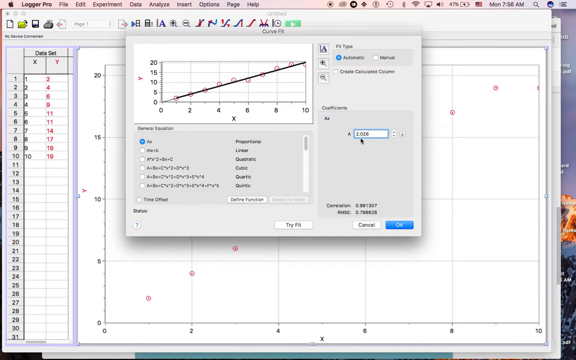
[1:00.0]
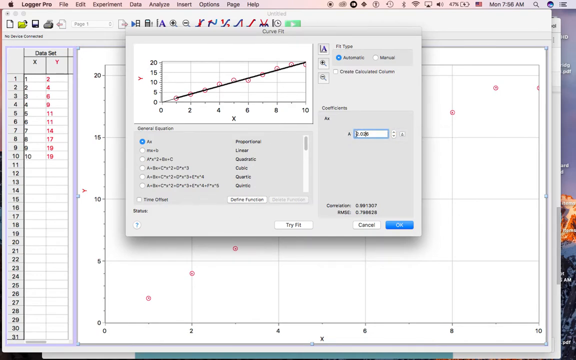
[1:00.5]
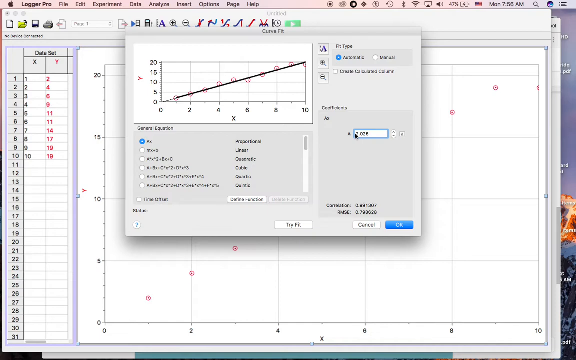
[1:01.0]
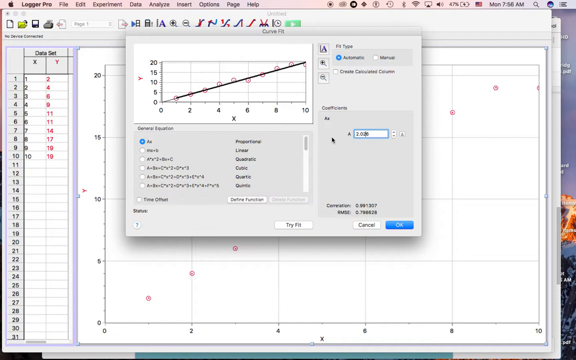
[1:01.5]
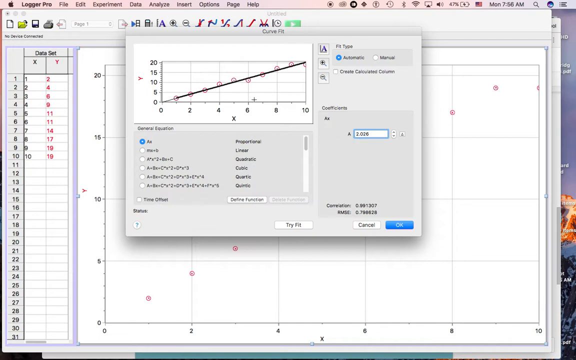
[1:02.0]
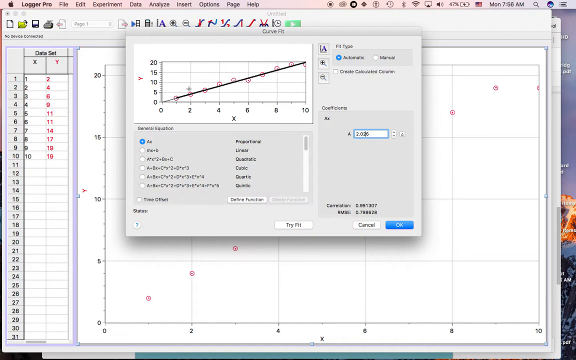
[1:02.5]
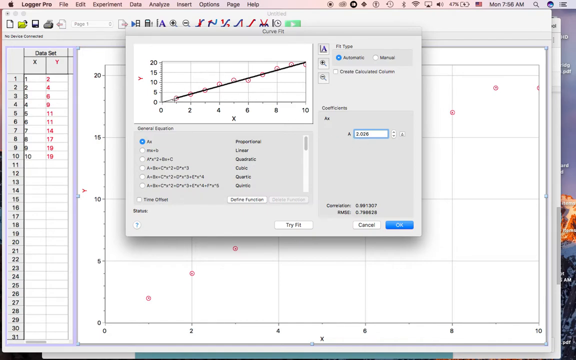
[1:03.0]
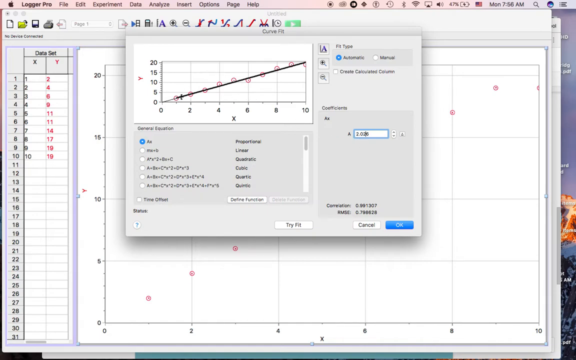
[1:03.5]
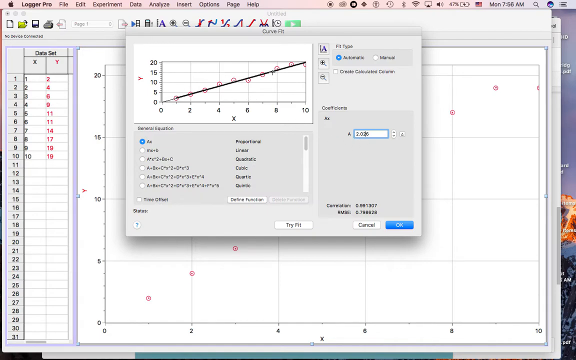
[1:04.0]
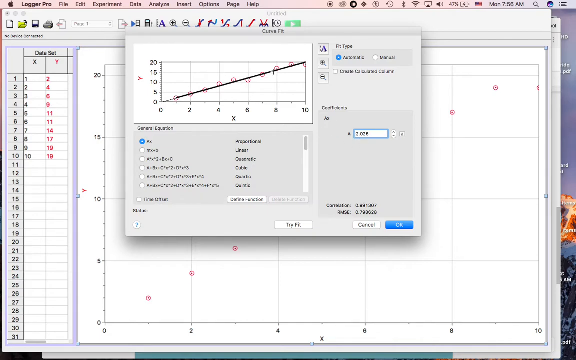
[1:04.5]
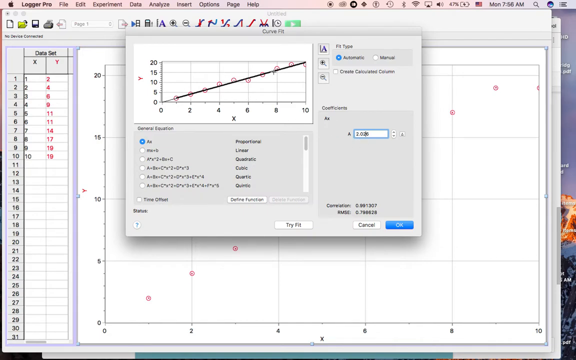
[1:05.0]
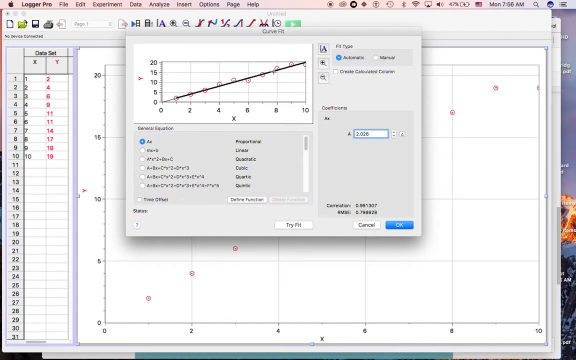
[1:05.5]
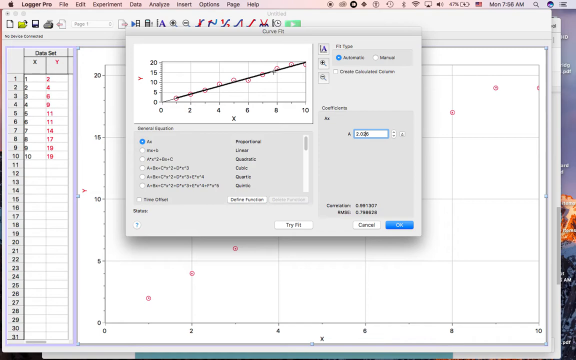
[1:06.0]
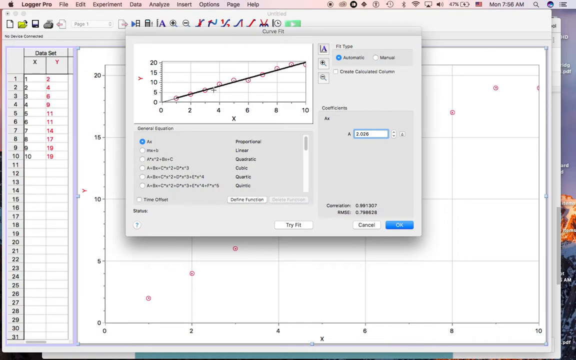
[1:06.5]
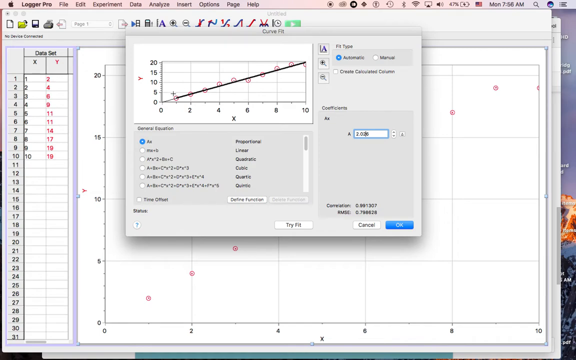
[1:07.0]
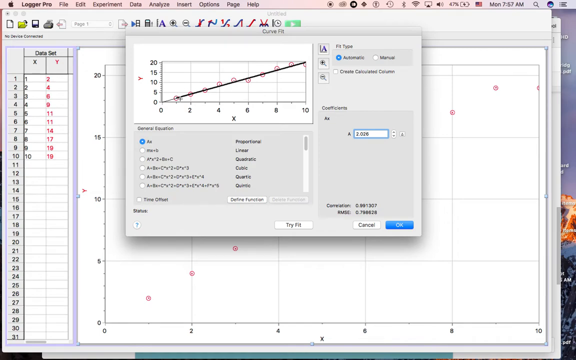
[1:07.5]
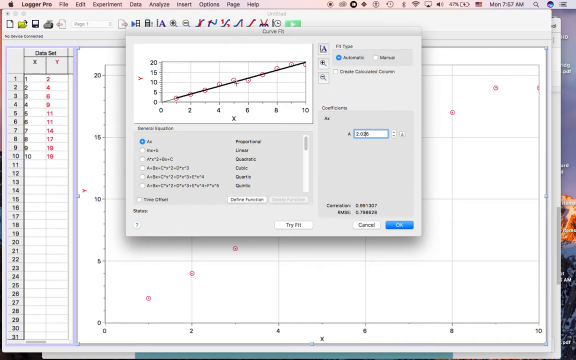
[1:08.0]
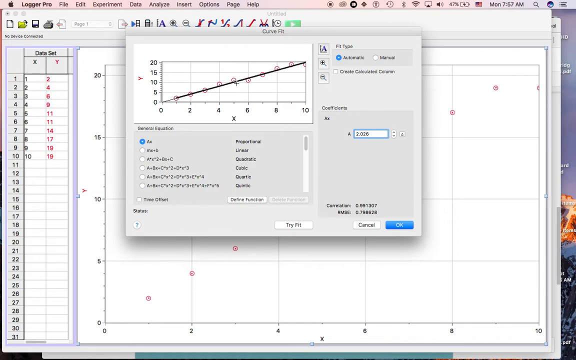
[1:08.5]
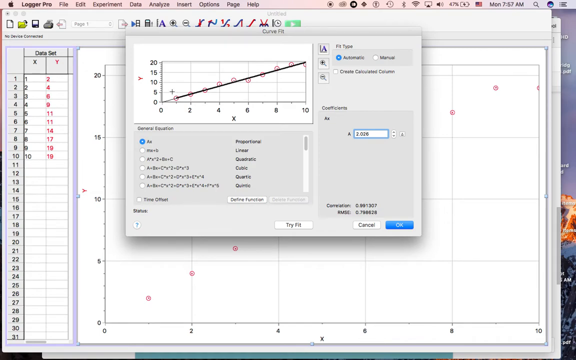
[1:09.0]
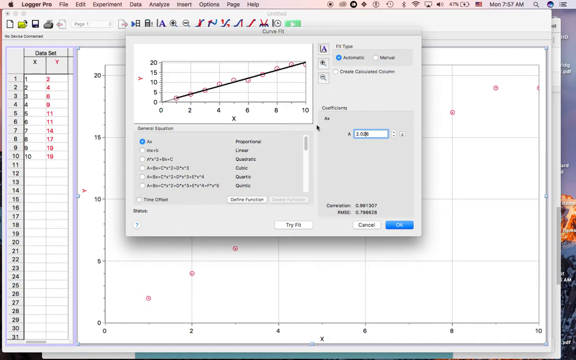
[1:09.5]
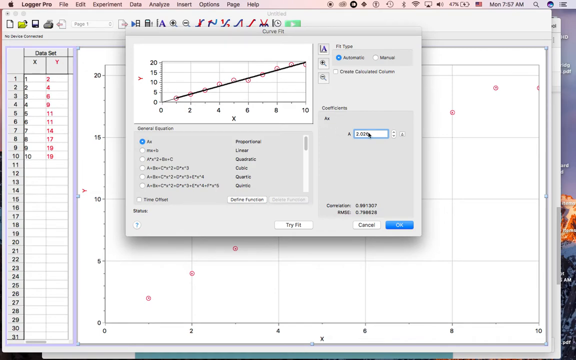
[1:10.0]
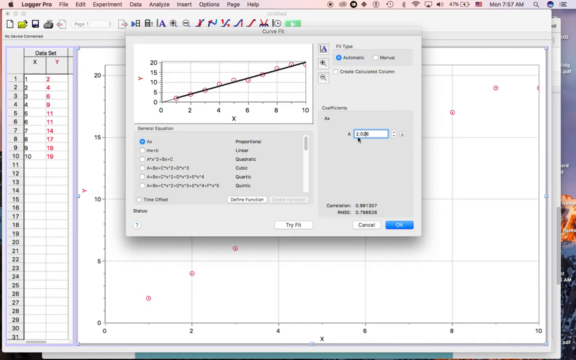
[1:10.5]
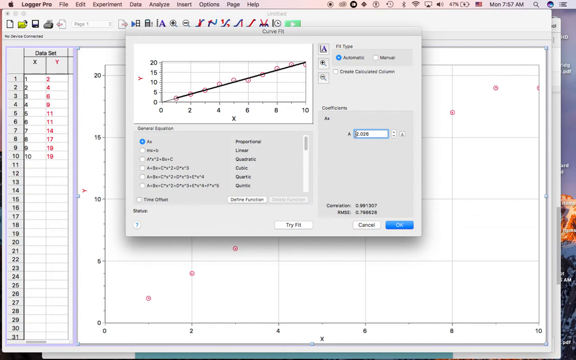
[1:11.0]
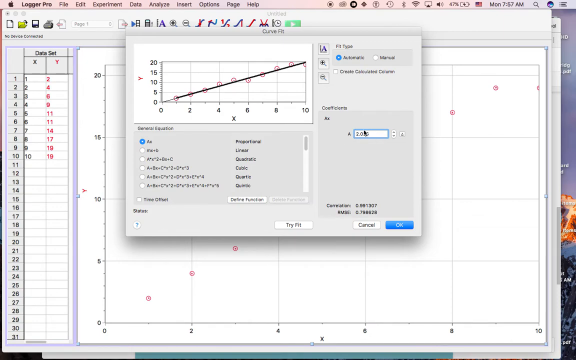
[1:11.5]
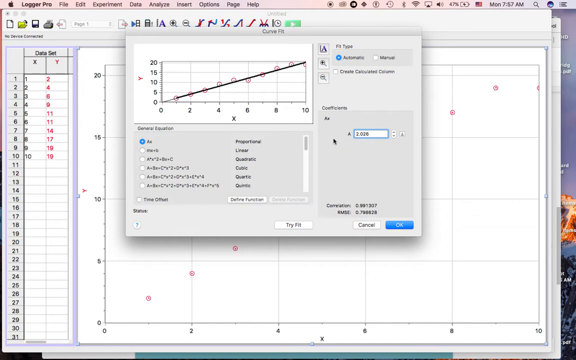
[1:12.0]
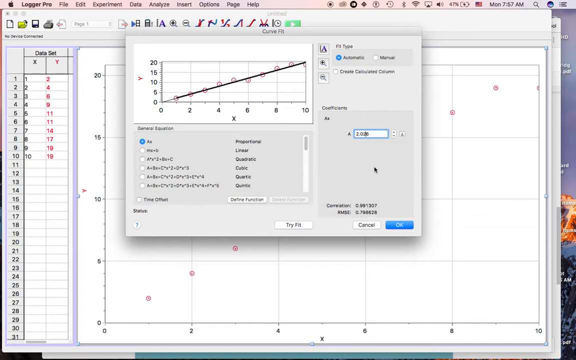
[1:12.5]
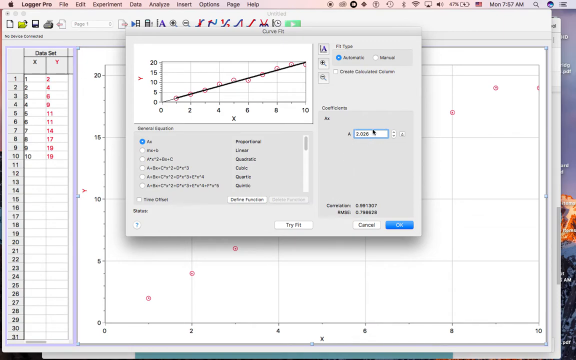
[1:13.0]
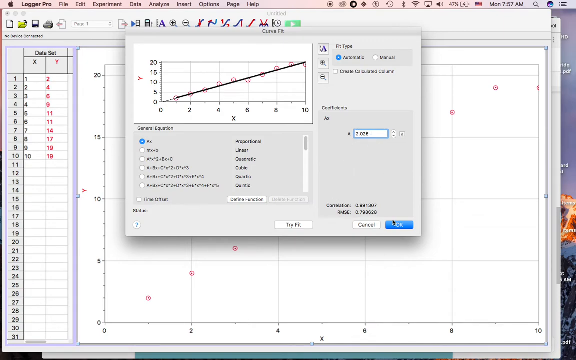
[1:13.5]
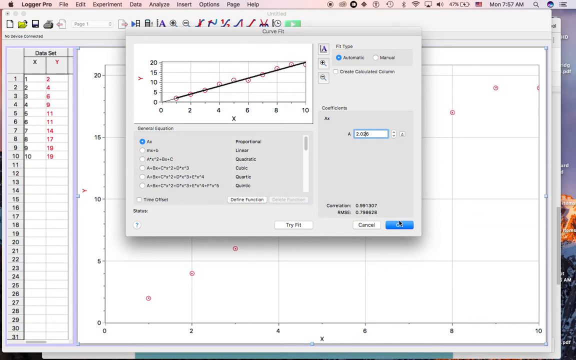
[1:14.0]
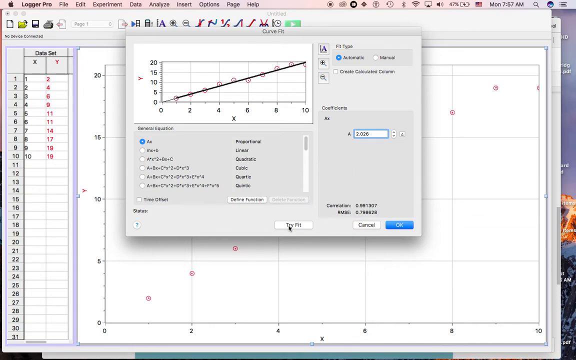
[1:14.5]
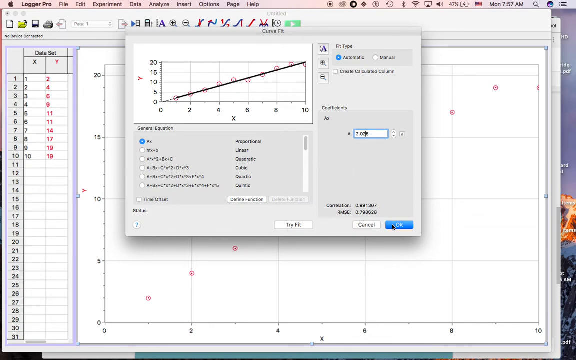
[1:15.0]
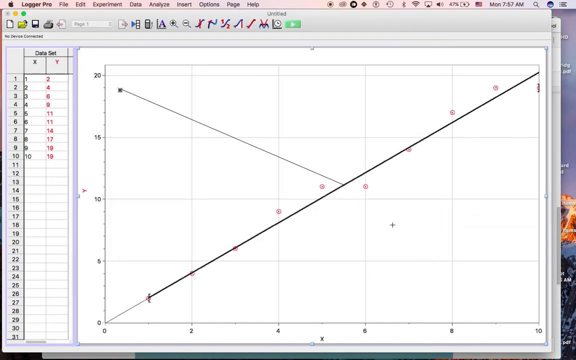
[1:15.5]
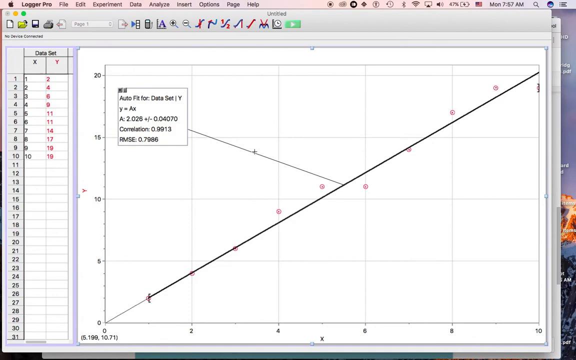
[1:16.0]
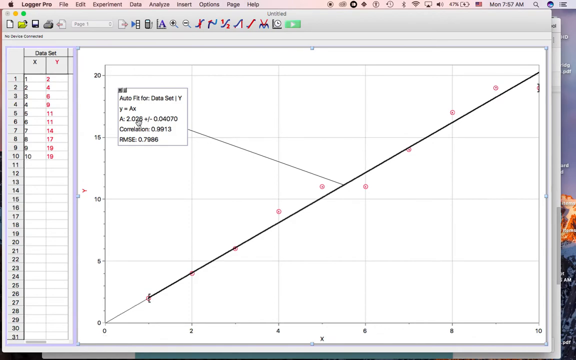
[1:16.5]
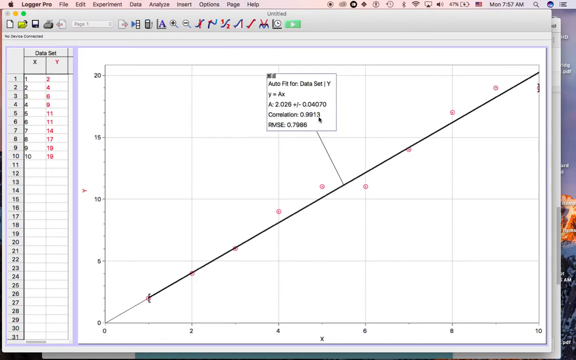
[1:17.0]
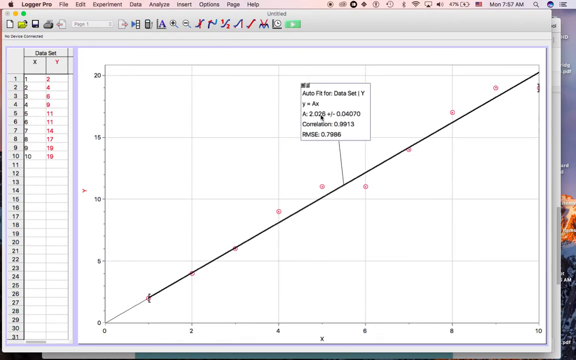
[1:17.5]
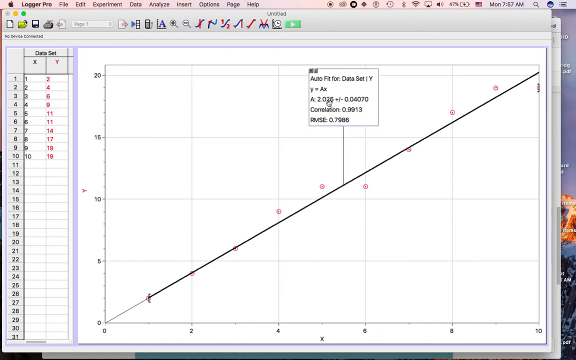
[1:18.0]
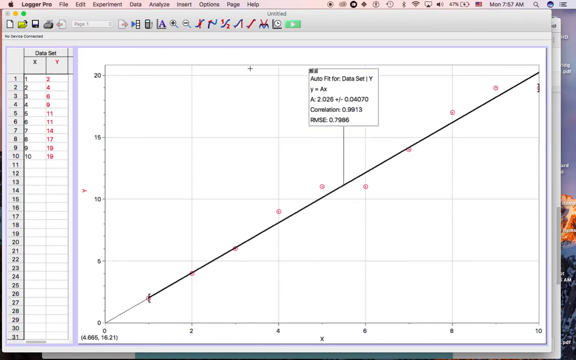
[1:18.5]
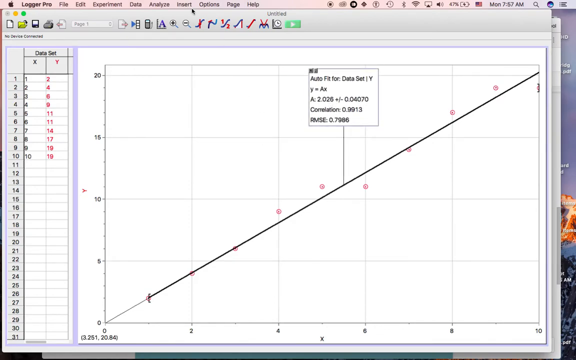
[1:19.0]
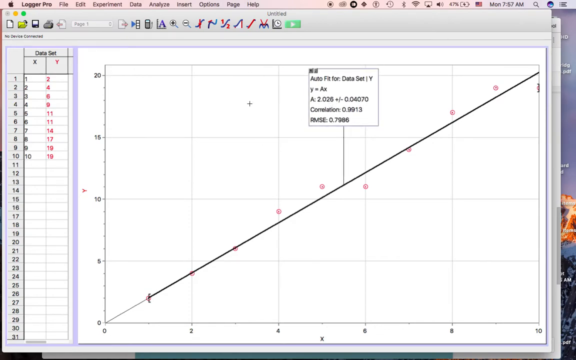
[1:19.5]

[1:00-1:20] The mouse pointer is over the text box, the input area, then goes to the left side over the preview of the graph and follows the direction of the black diagonal line on it. It goes back to the text box area with the number 2.026 and circles around the number and the box. The cursor moves down to the bottom right corner of the window, onto the OK button, and clicks OK. The window disappears, and the original graph window is visible again, now adjusted: a black diagonal line runs through the graph, going upward to the right. The mouse pointer moves around.